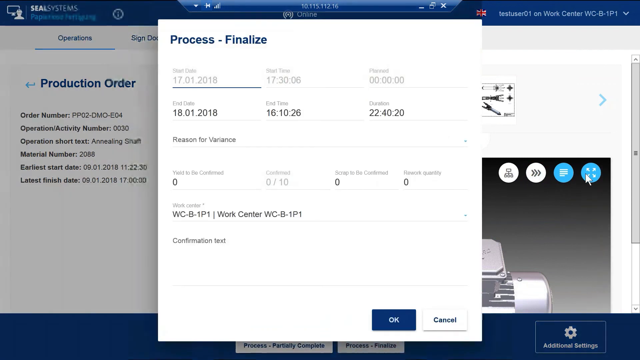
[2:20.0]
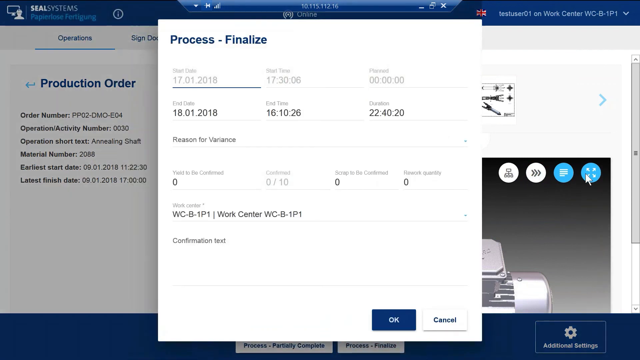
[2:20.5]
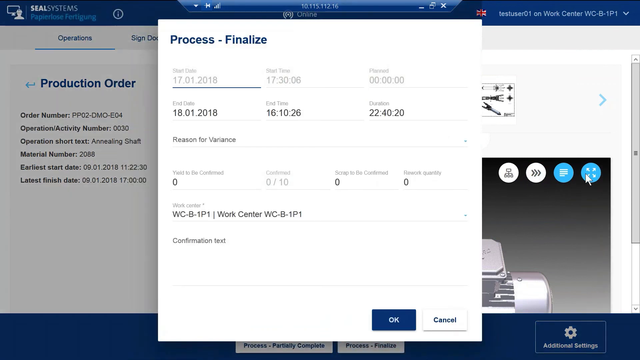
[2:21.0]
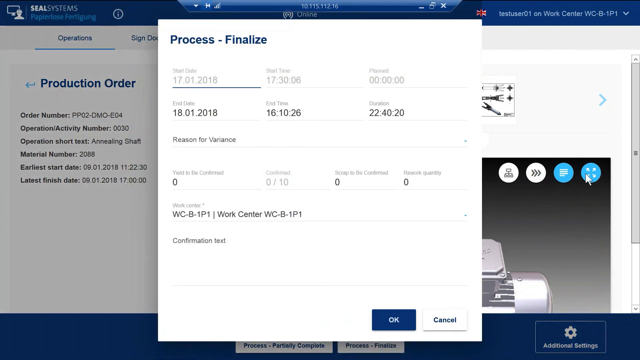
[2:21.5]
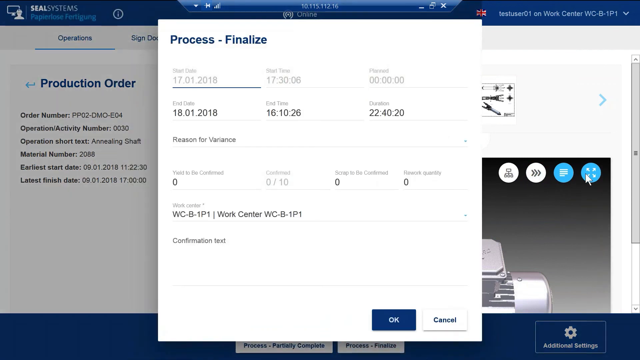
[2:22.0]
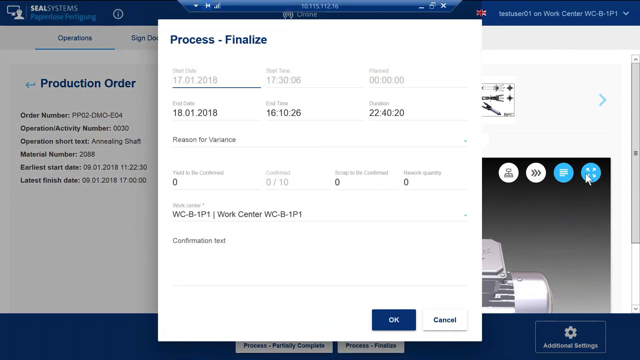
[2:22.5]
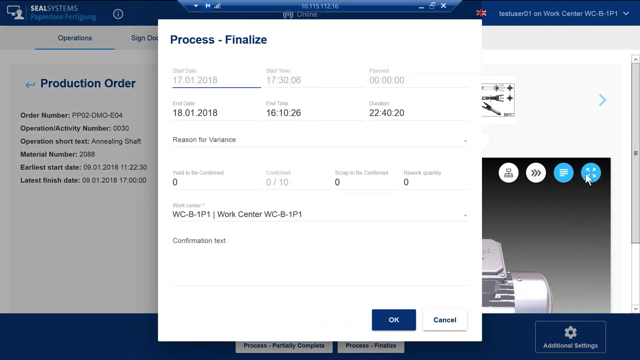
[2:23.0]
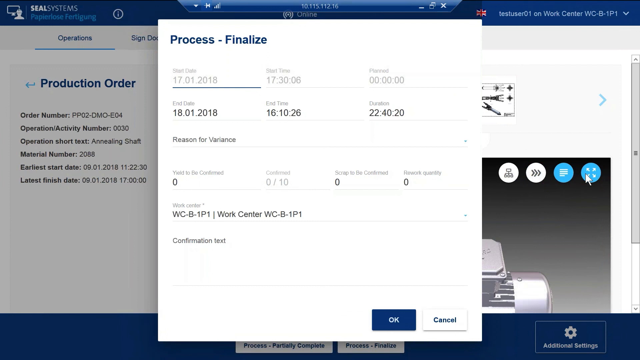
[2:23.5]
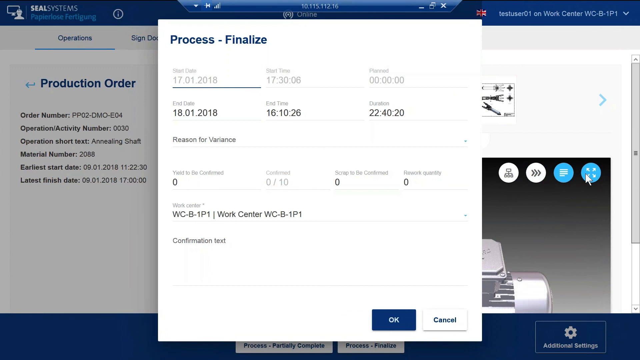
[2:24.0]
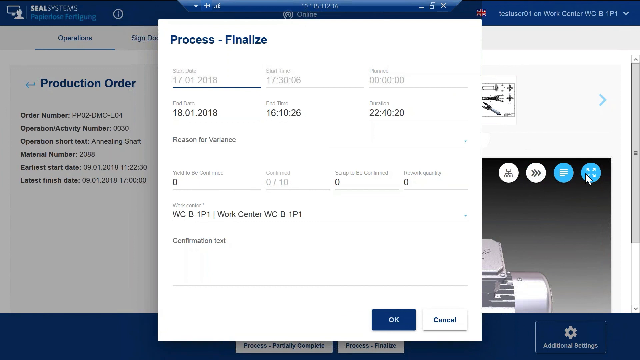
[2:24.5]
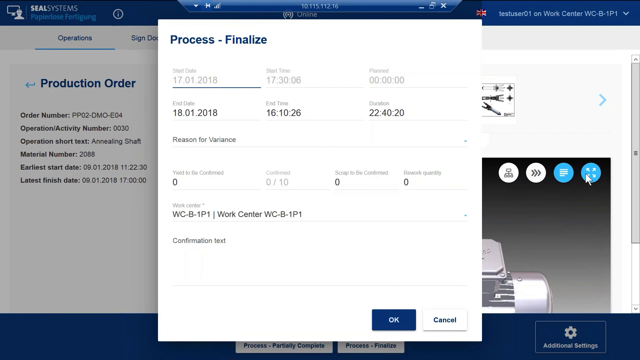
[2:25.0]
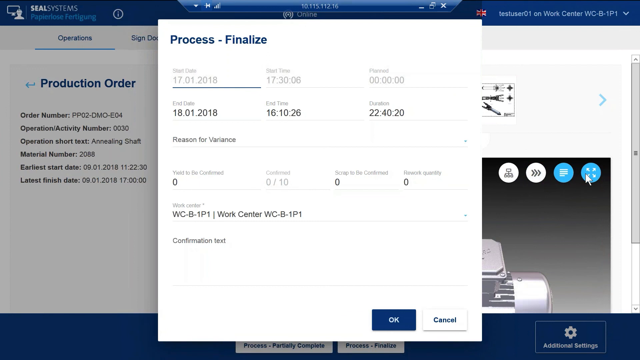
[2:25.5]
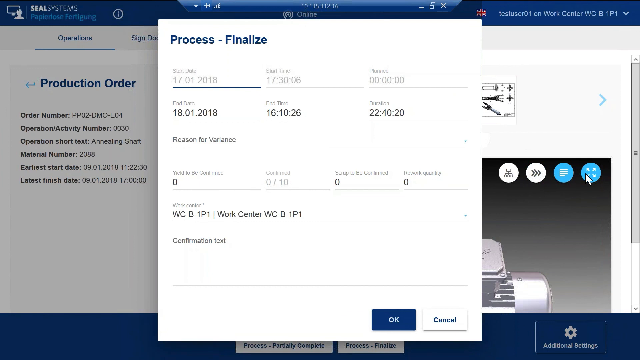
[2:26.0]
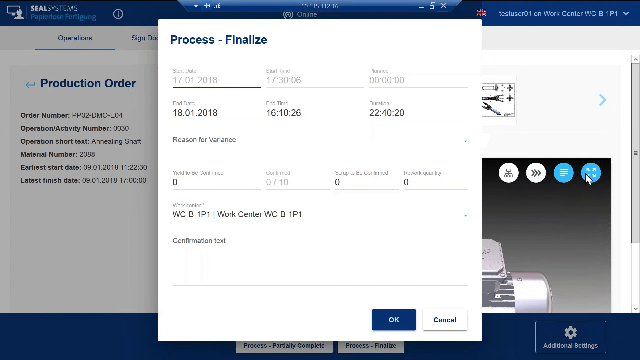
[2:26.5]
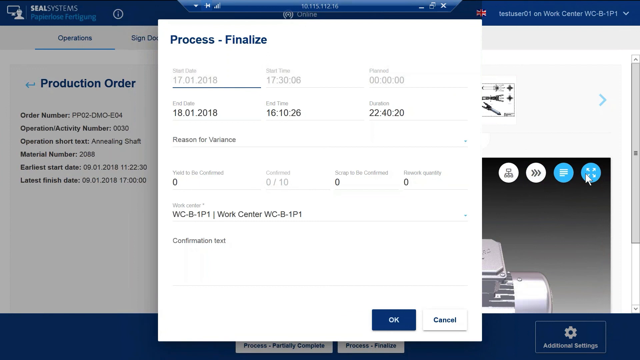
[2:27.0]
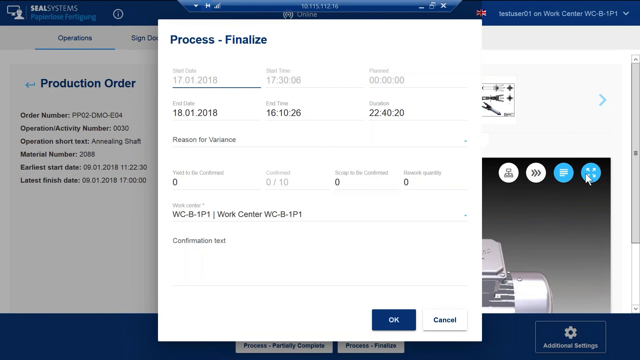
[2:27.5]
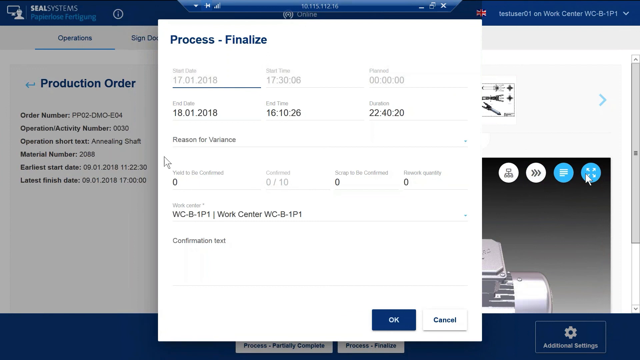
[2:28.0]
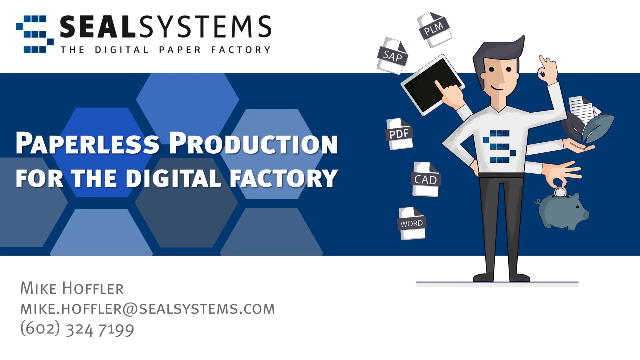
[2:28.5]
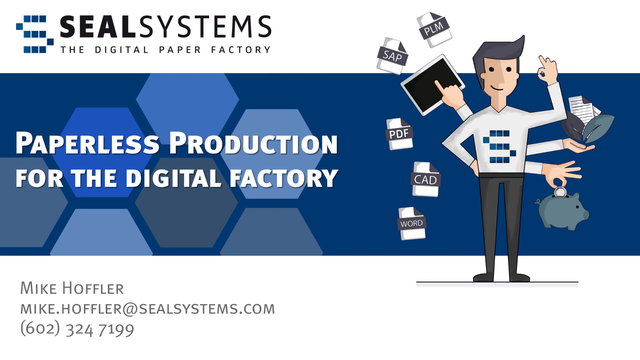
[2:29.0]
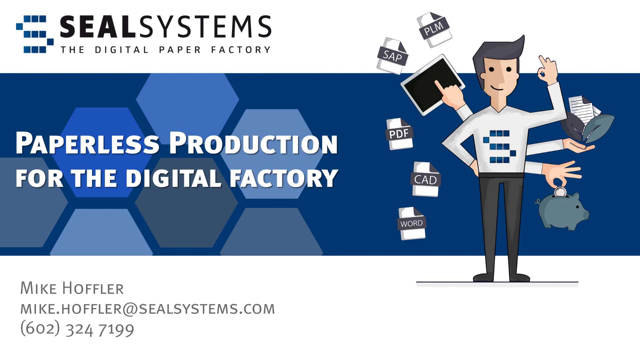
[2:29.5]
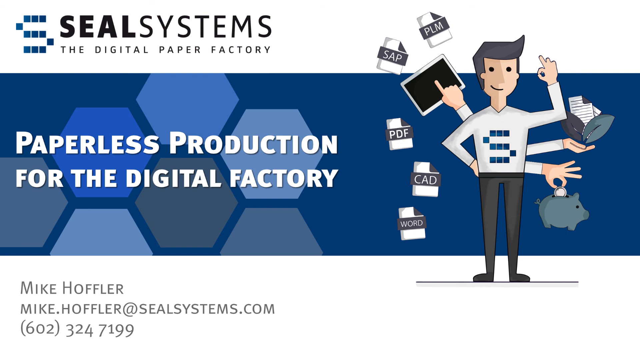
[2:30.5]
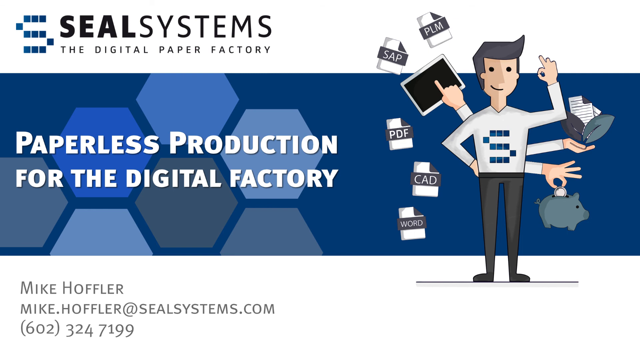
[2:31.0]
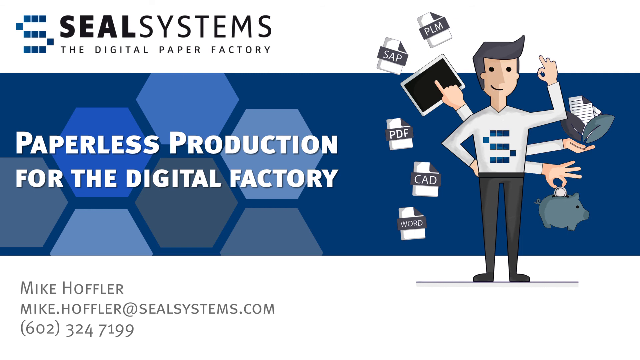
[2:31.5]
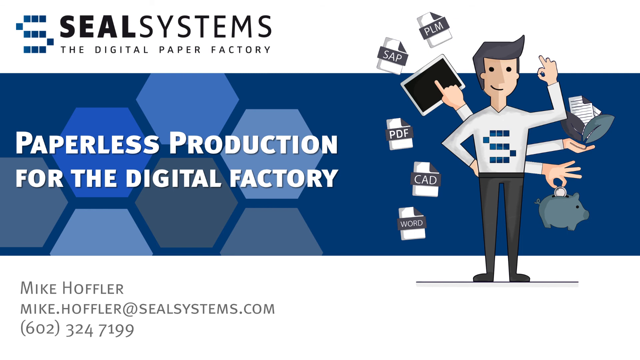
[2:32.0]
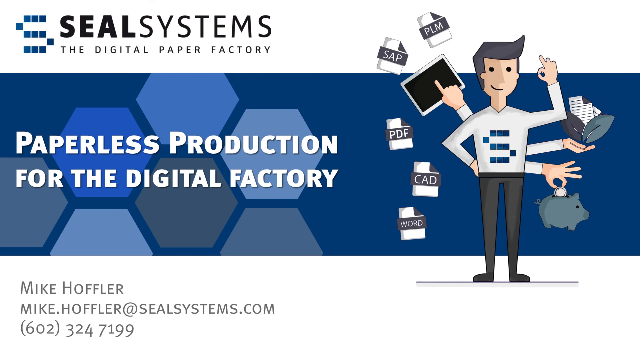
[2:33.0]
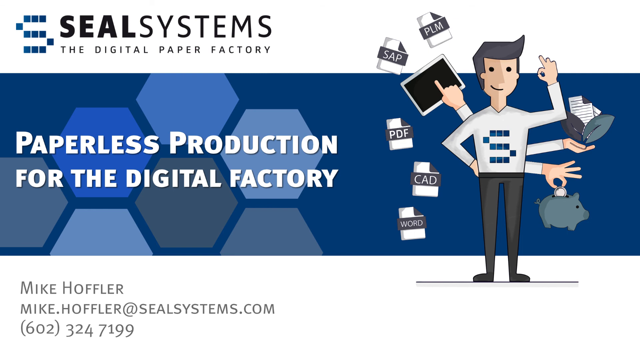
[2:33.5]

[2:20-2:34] A computer screen shows an application for a company called Seal Systems, apparently an order processing application. A production order is open, and a button to process and finalise the order has been selected, loading a pop-up on the screen. The pop-up includes start date and time information, which is greyed out; the end date and time is not greyed out and can be edited. The form has an OK and a cancel button. The user does not appear to make any changes to the form before the video ends.